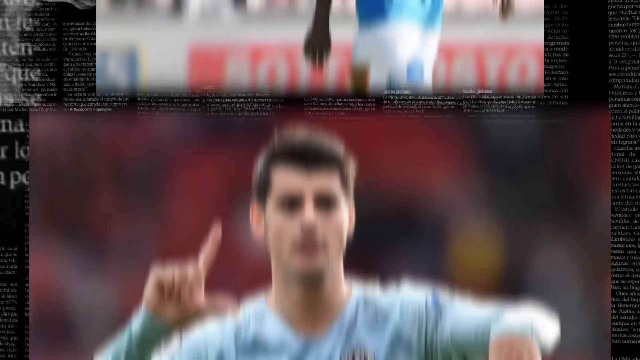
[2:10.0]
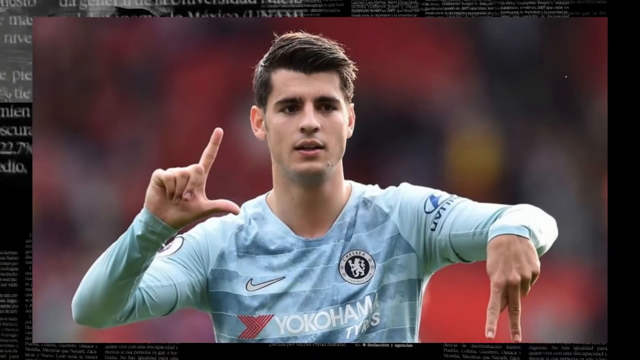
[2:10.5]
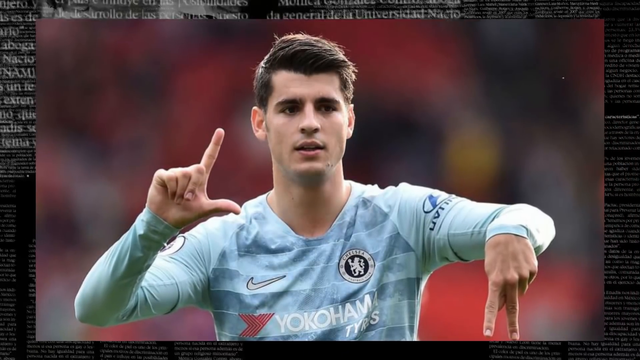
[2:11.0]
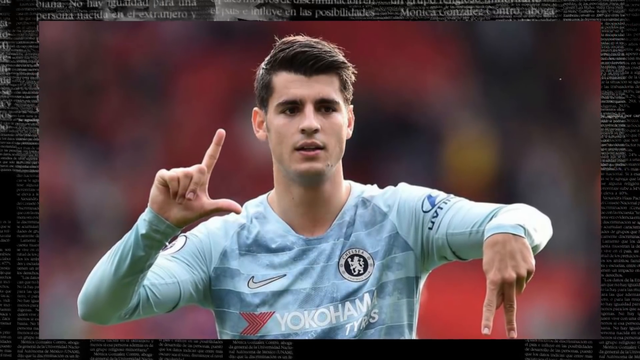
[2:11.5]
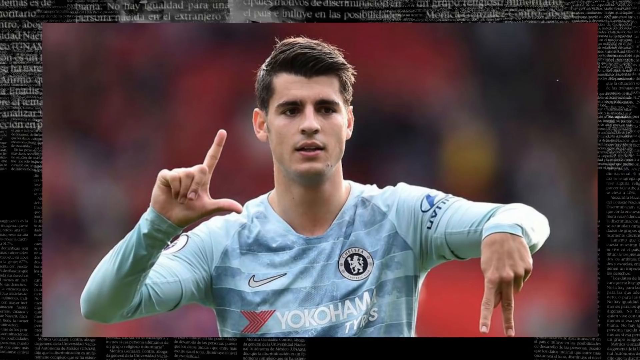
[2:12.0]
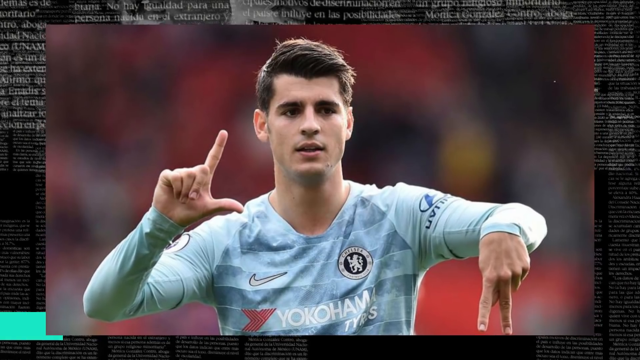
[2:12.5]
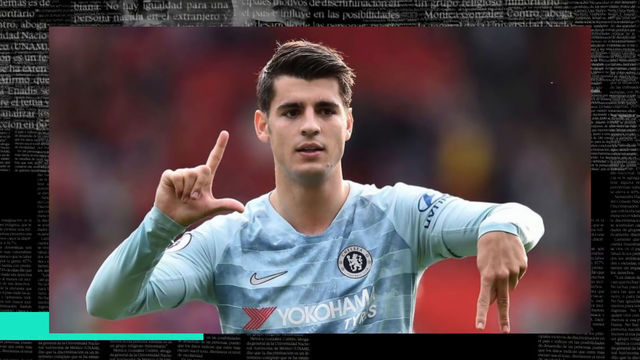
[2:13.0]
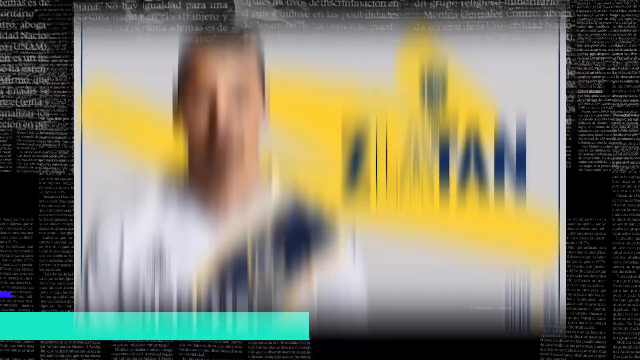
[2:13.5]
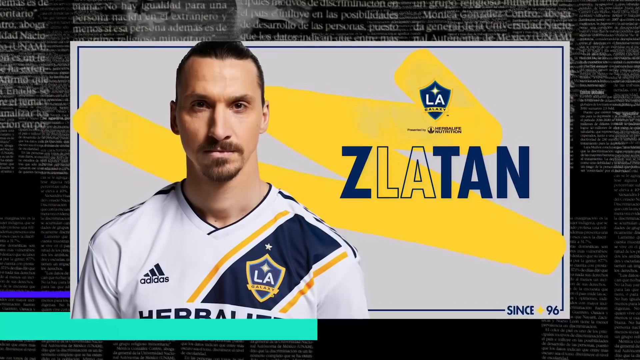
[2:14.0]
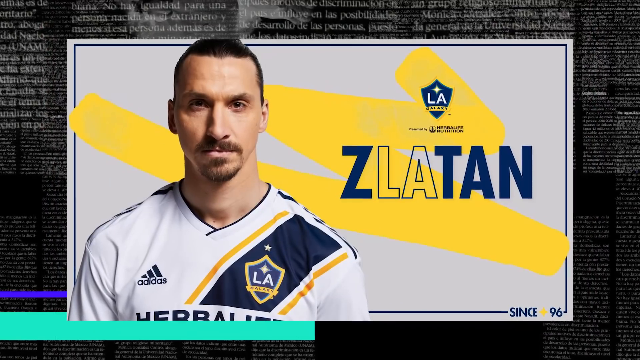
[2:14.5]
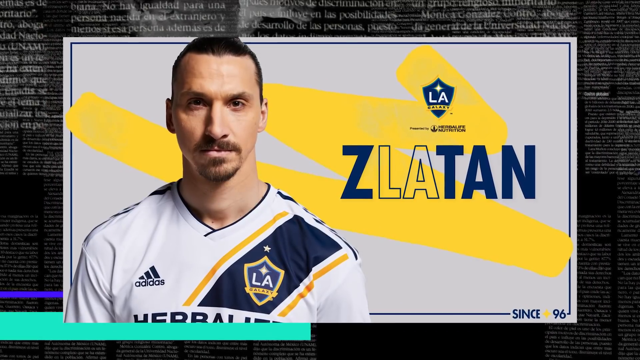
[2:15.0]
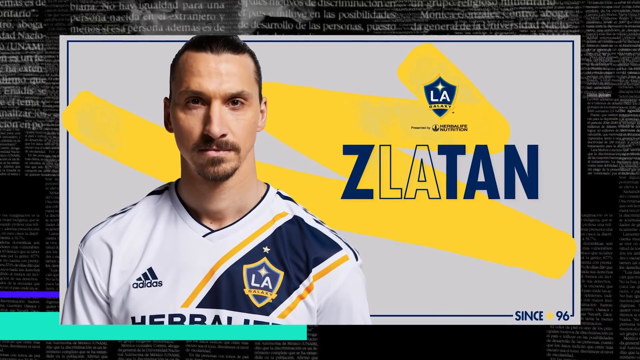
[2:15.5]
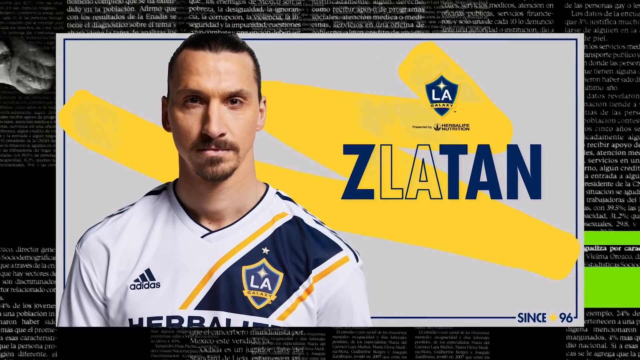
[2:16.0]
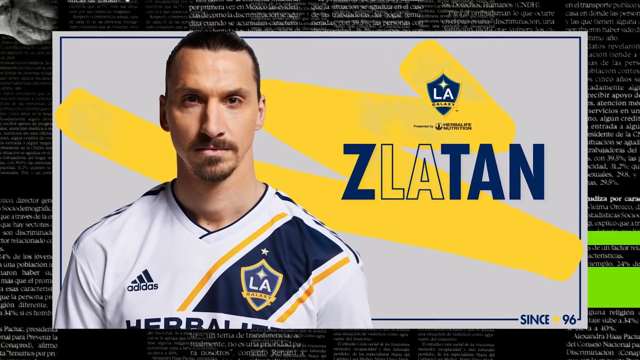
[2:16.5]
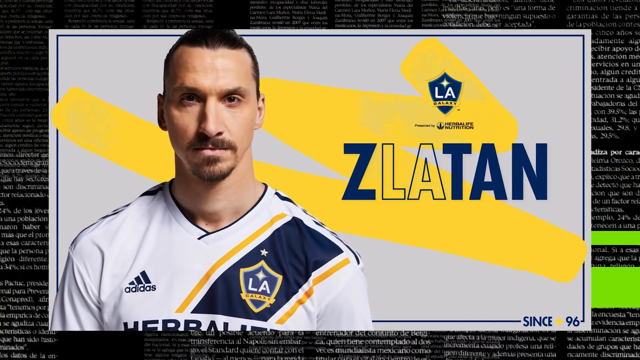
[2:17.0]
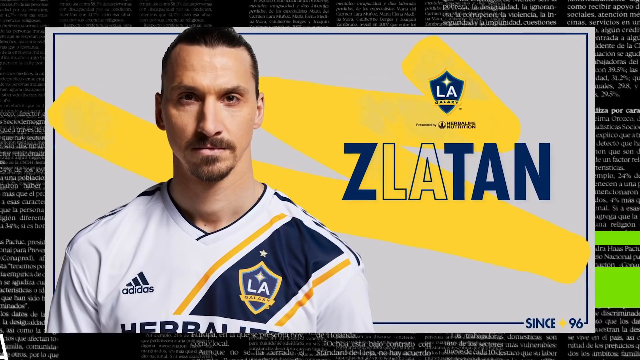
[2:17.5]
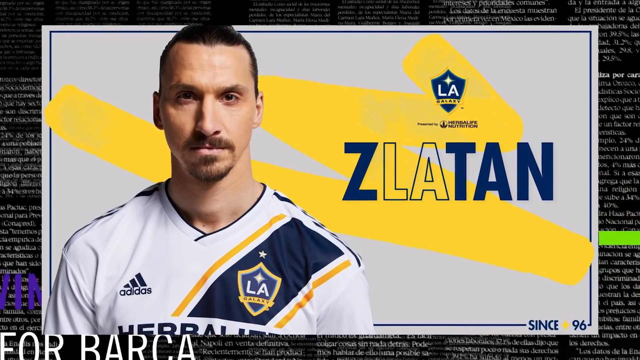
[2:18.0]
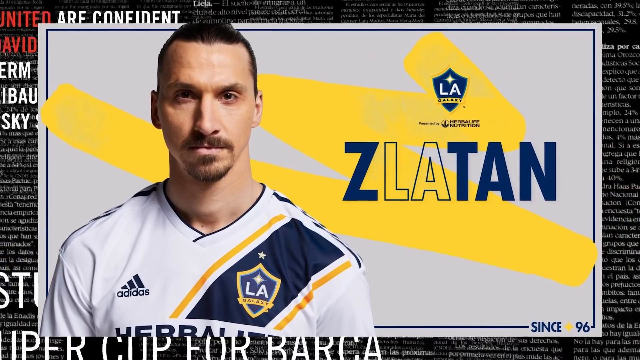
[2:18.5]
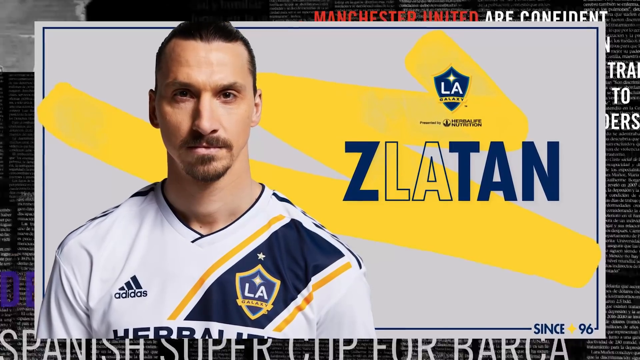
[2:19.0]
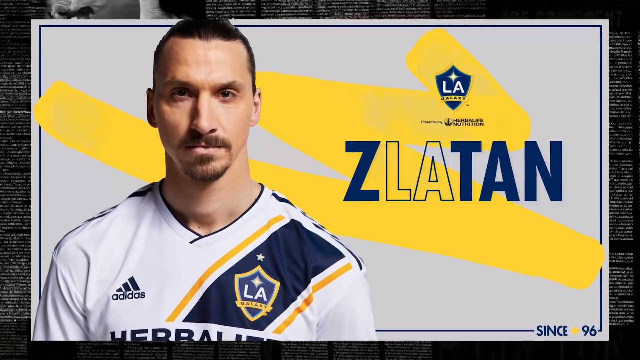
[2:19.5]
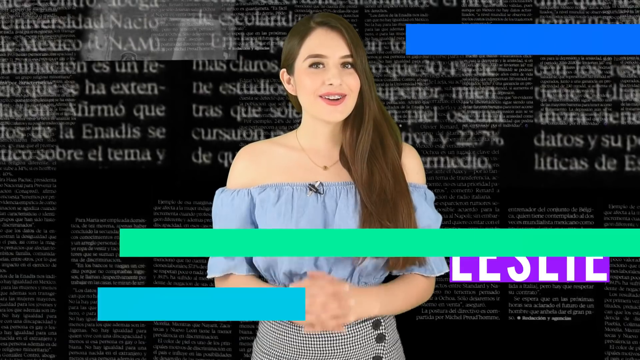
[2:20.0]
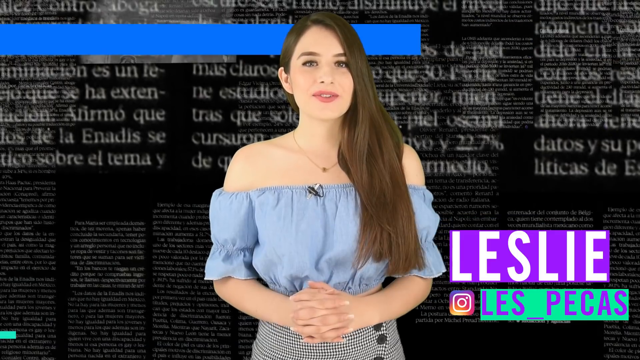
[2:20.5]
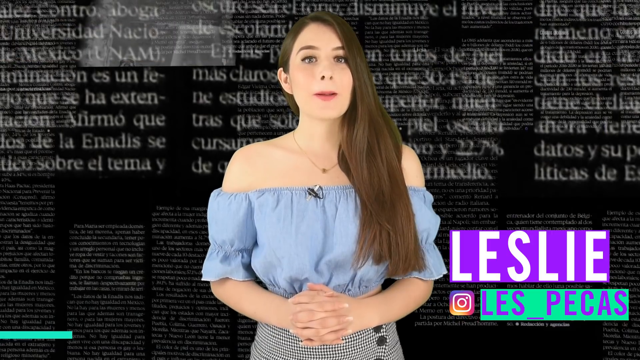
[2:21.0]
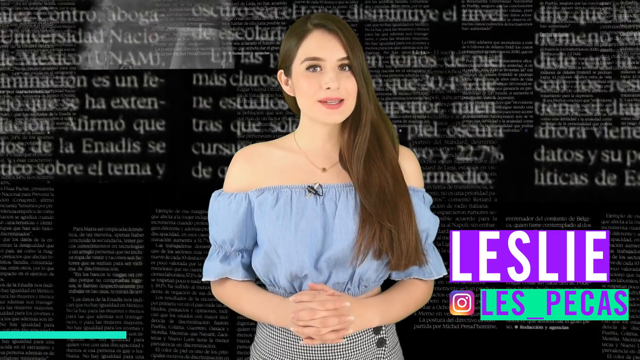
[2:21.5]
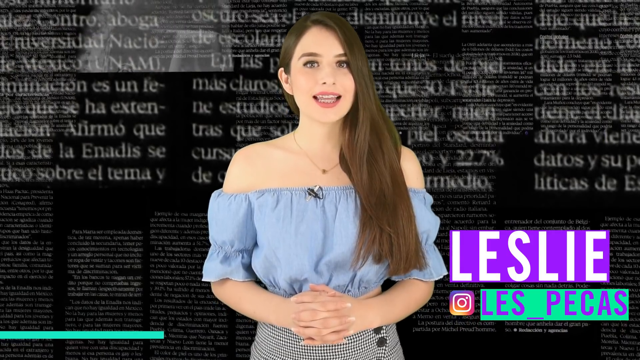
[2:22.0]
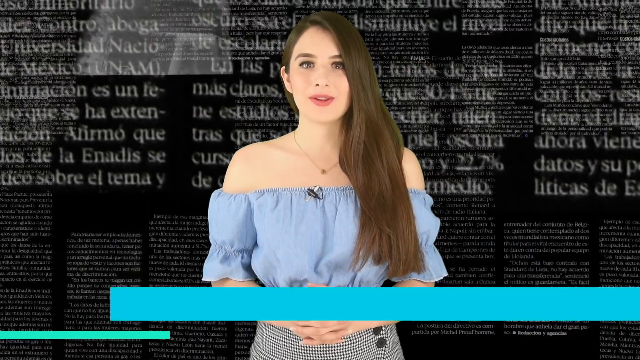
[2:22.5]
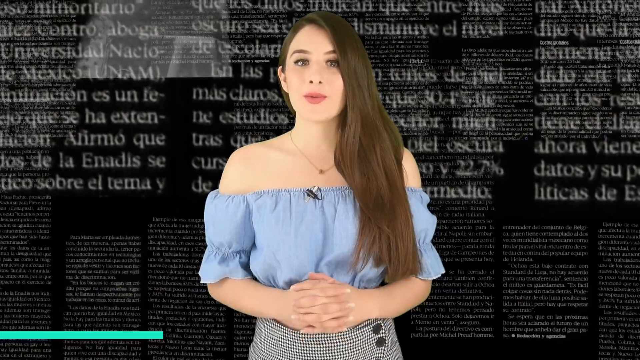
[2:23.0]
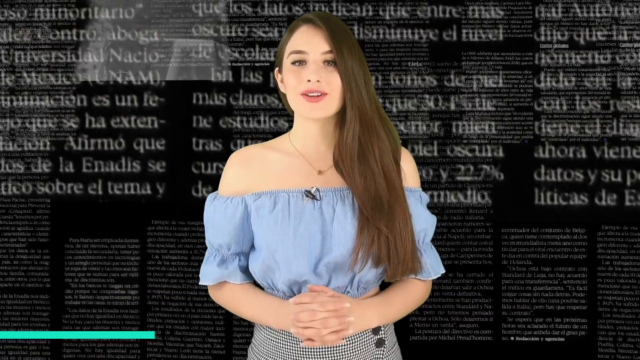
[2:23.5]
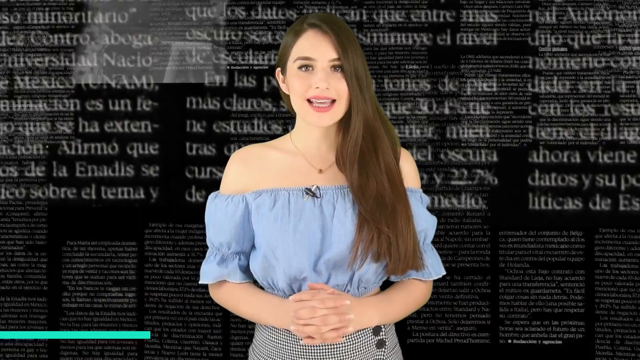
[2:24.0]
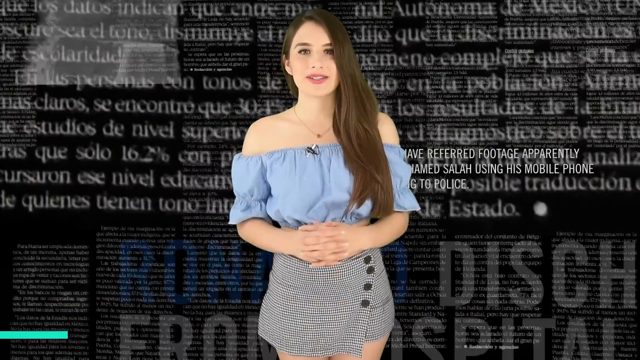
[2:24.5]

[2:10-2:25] A man is shown in a very white, teal and blue sort of jersey with more greenish sleeves; it has a Nike swoosh and the word "Yo-Kam" visible on it. Another man follows, with a dark brownish mustache and very short hair, looking somberly at the camera. His white shirt has the letters "LA" on the viewer's right and Adidas shown on the left. To his right is an image of a yellow sort of swoosh on a white background, with the letter "Z" in blue, the letters "LA" in white with a yellow background behind them, and "TAN" to the right, also in blue. The young woman from the very beginning of the video is seen again, wearing her light blue top, her brown hair swooping to her right. She talks to the camera.